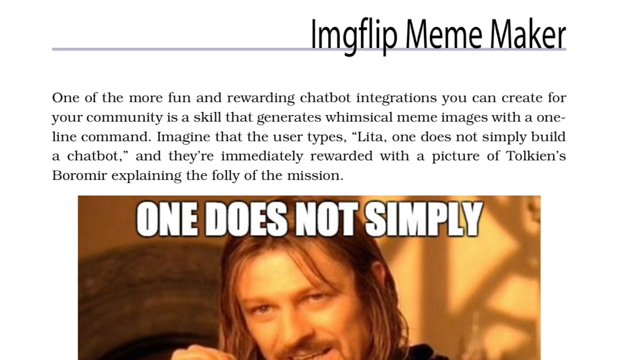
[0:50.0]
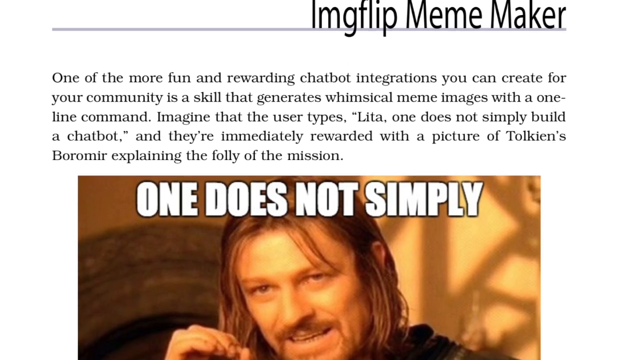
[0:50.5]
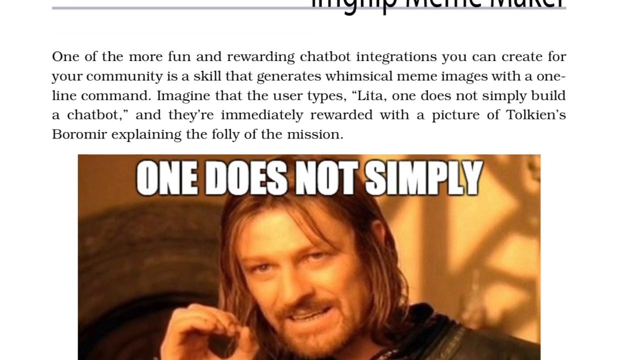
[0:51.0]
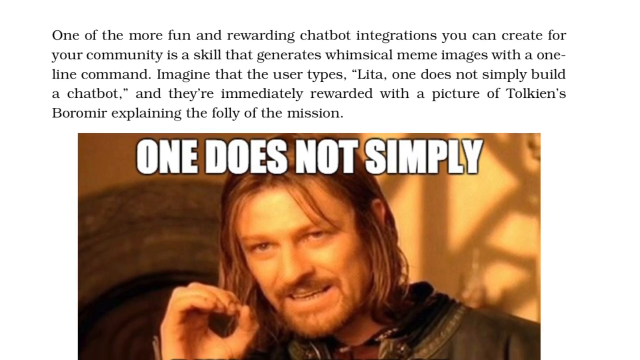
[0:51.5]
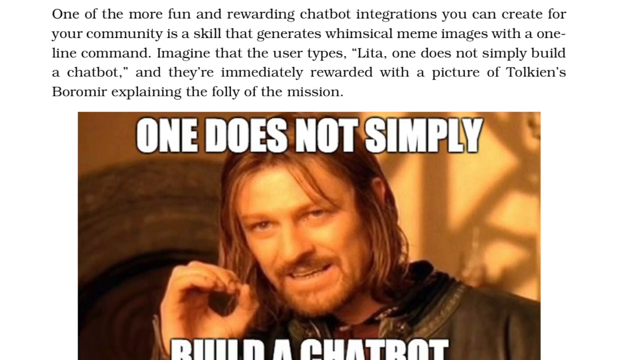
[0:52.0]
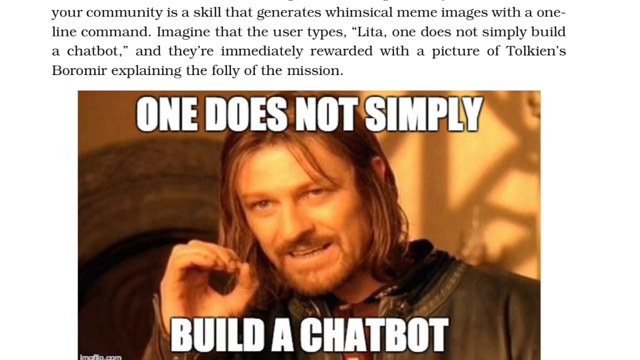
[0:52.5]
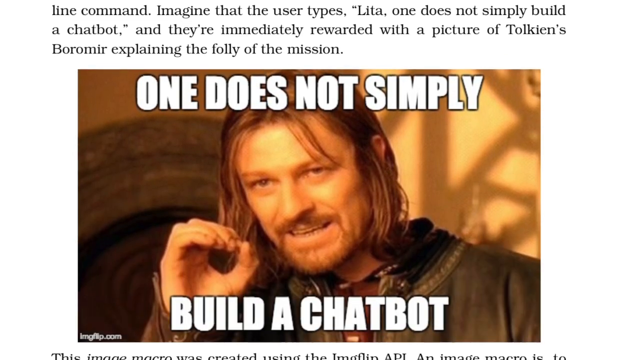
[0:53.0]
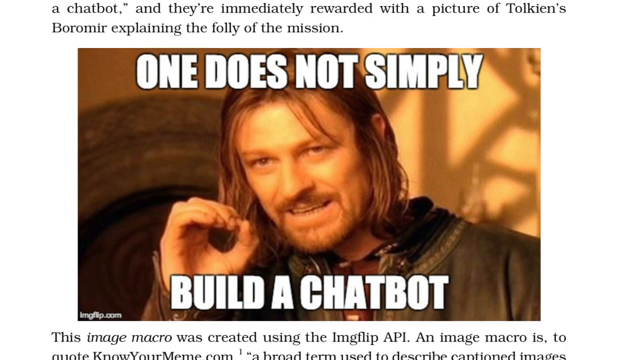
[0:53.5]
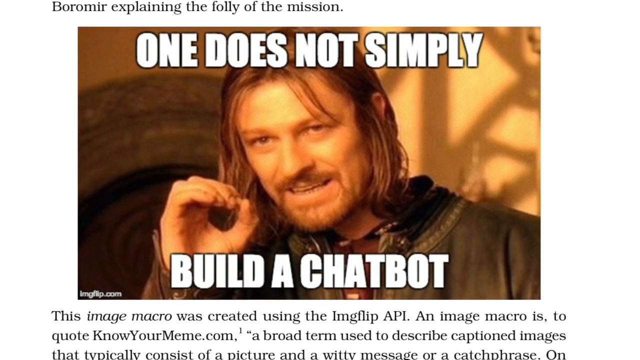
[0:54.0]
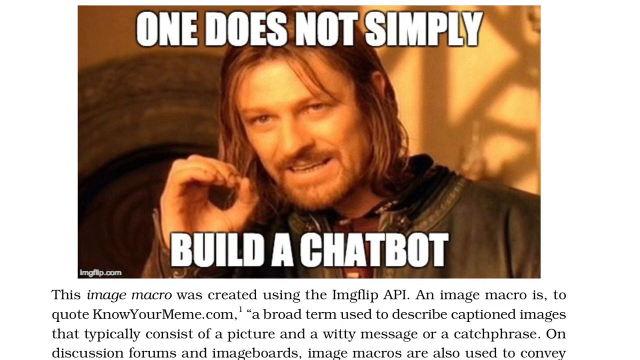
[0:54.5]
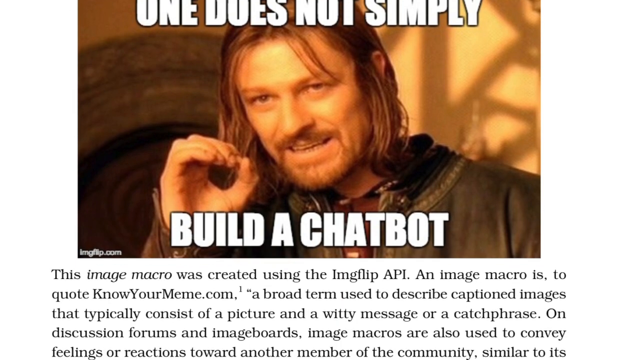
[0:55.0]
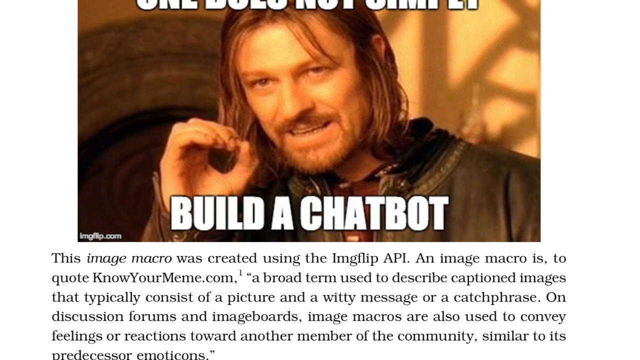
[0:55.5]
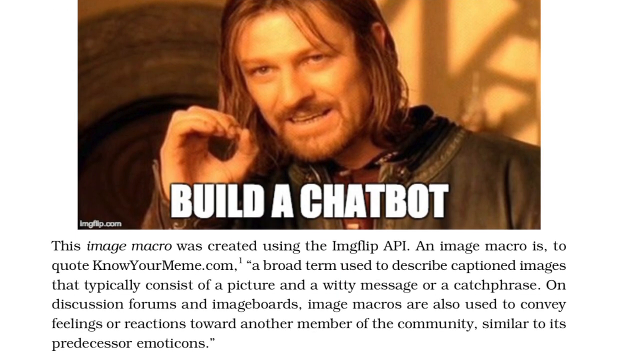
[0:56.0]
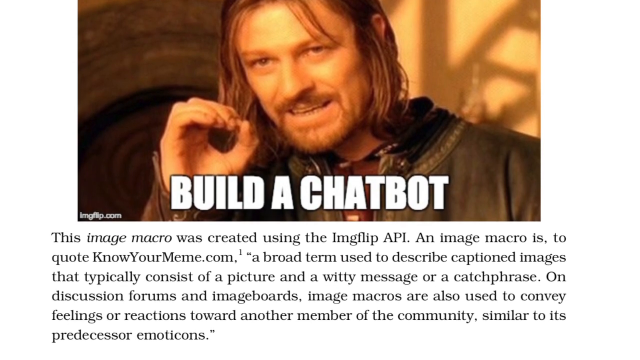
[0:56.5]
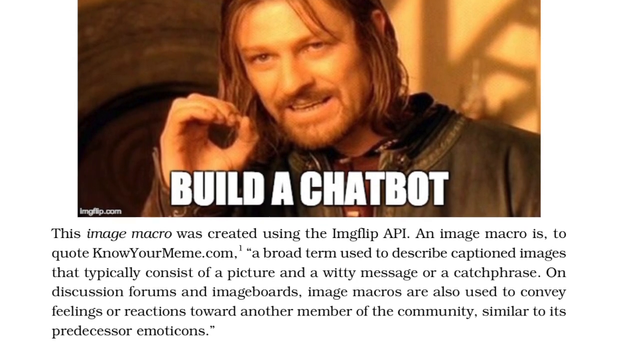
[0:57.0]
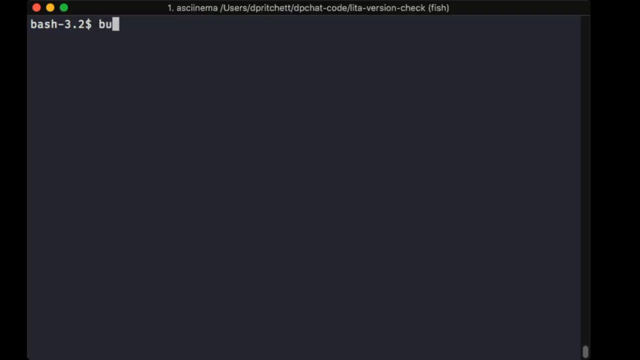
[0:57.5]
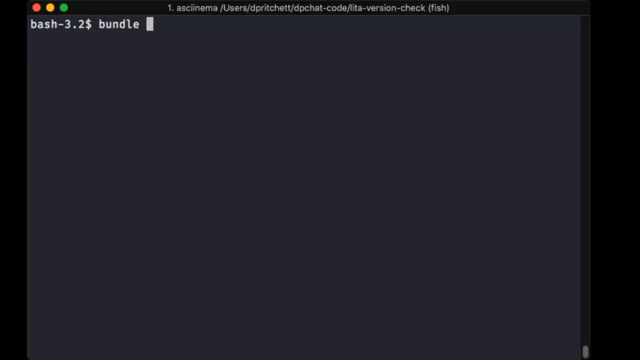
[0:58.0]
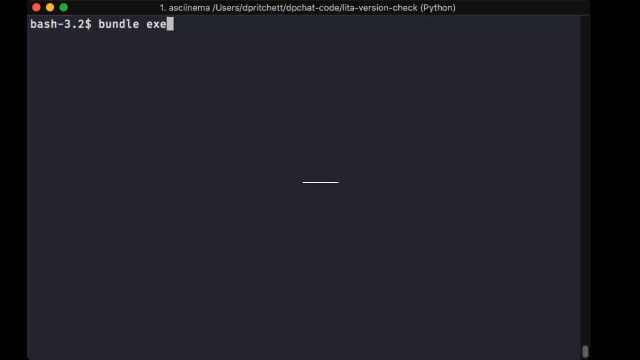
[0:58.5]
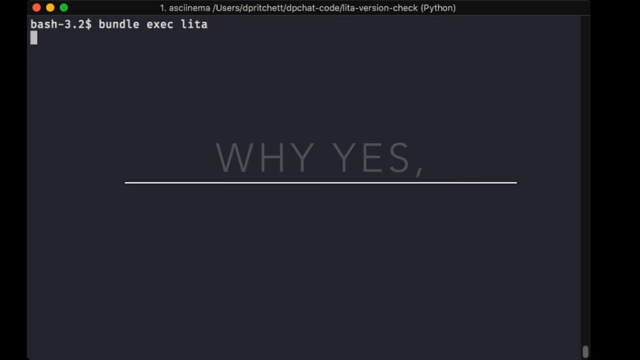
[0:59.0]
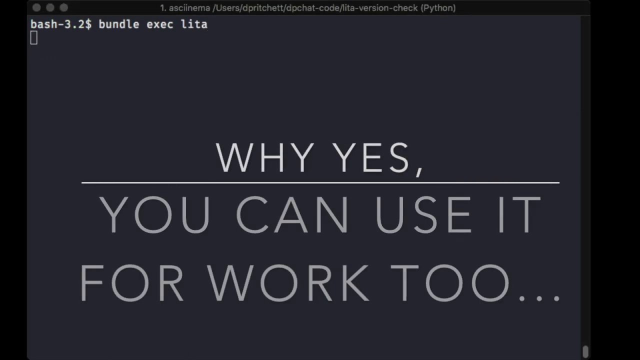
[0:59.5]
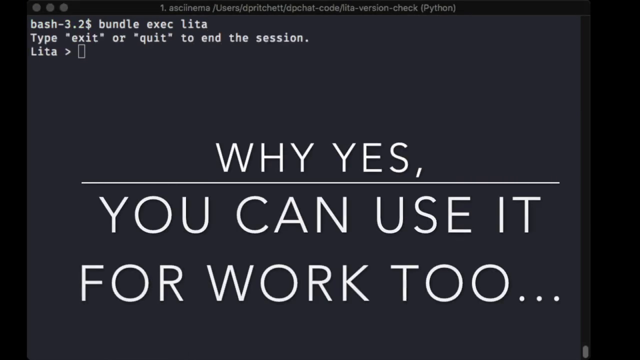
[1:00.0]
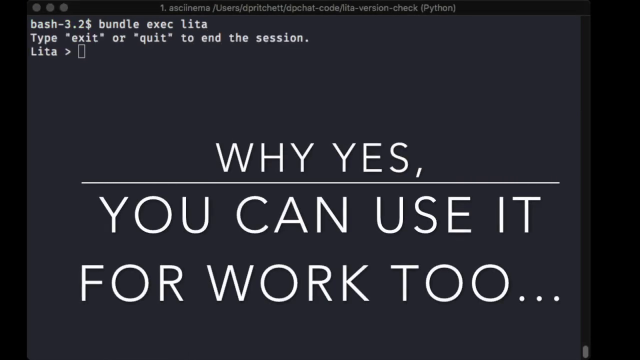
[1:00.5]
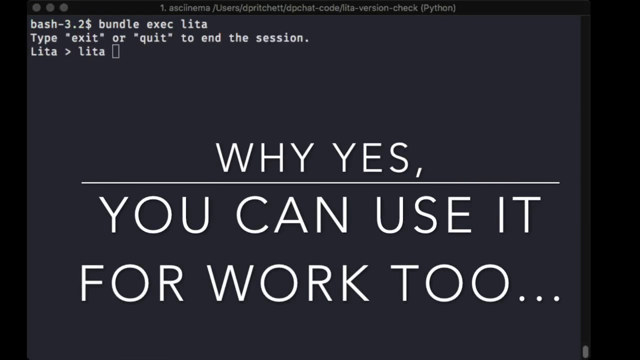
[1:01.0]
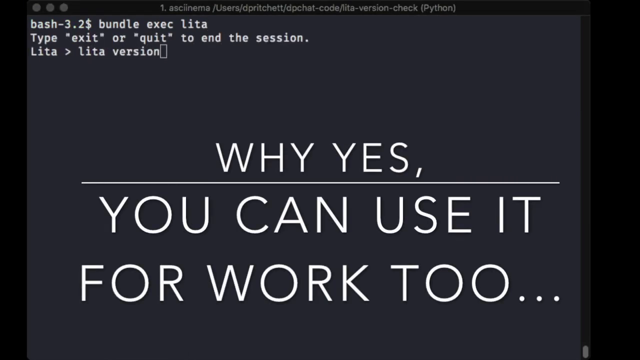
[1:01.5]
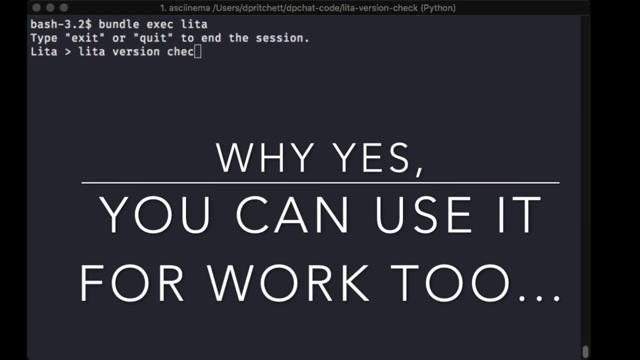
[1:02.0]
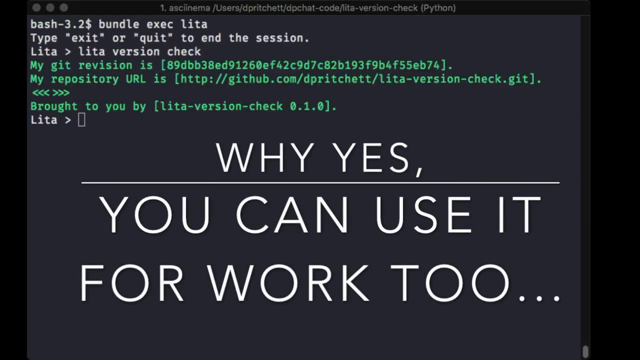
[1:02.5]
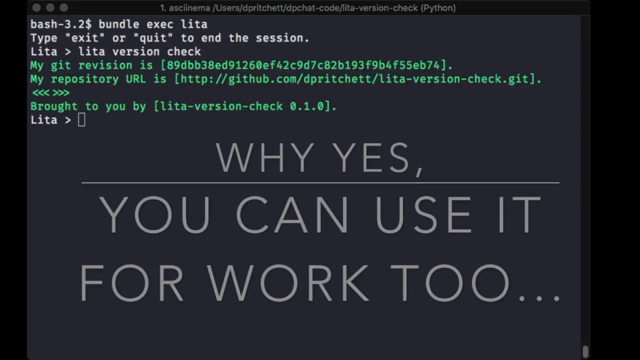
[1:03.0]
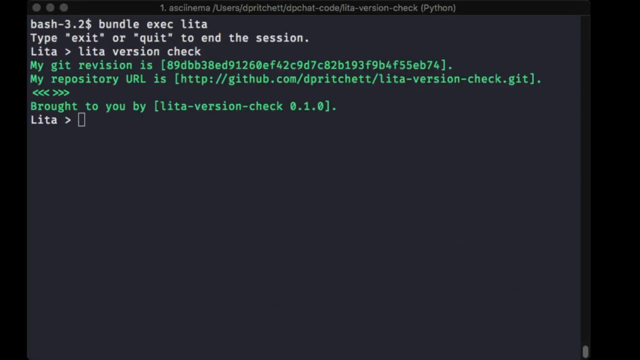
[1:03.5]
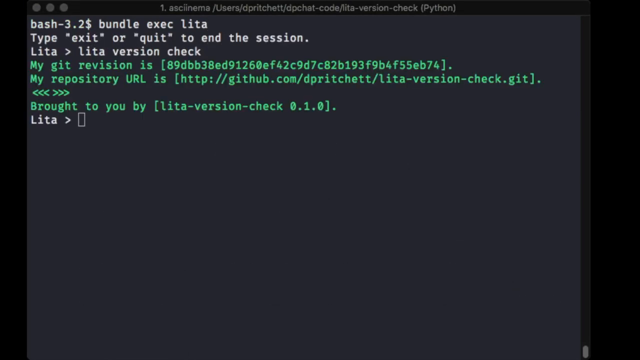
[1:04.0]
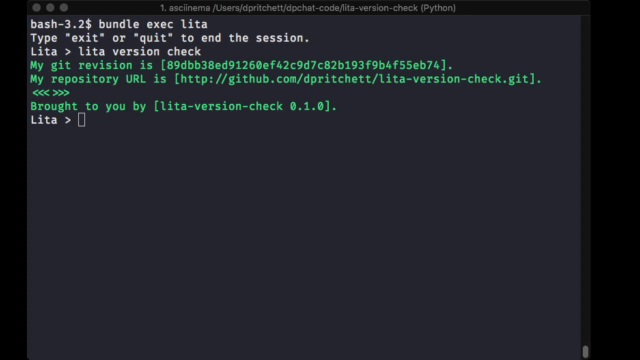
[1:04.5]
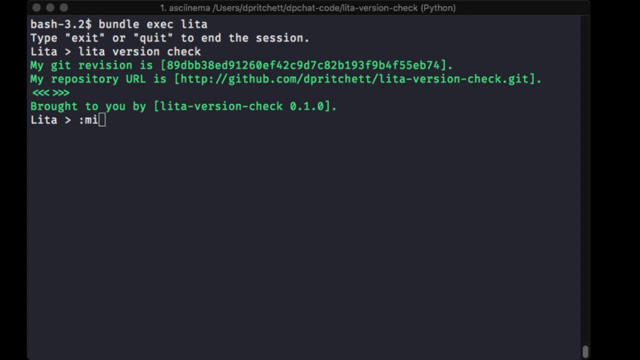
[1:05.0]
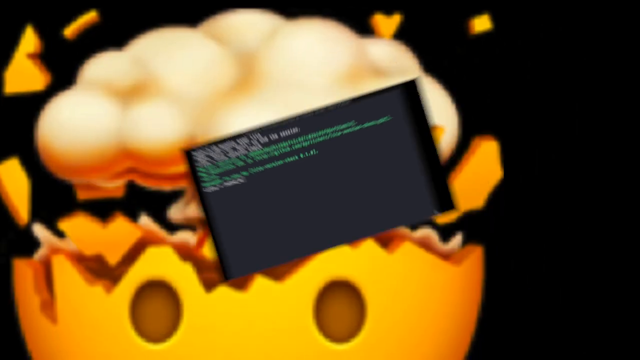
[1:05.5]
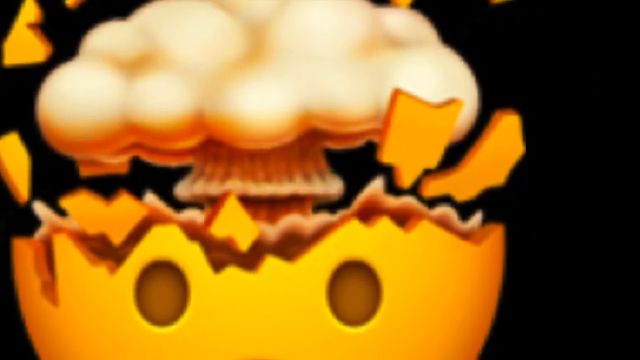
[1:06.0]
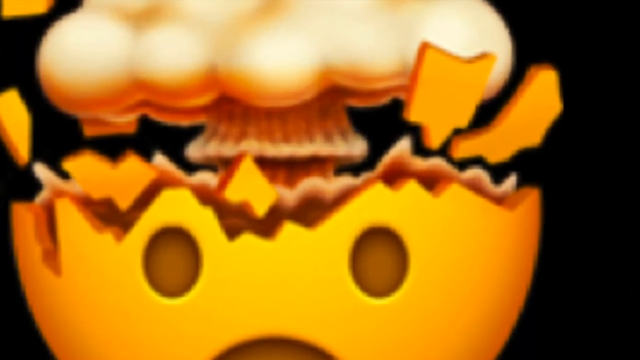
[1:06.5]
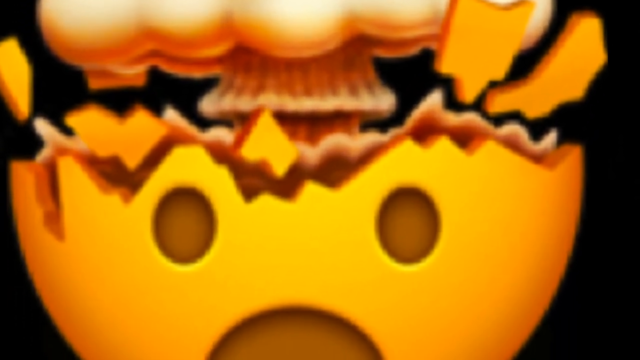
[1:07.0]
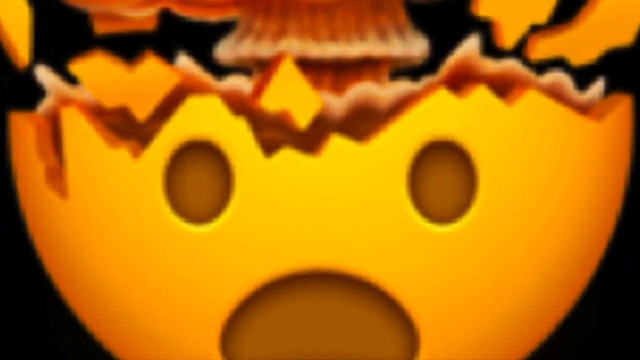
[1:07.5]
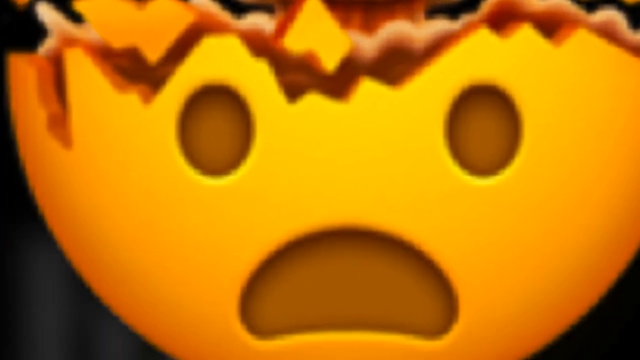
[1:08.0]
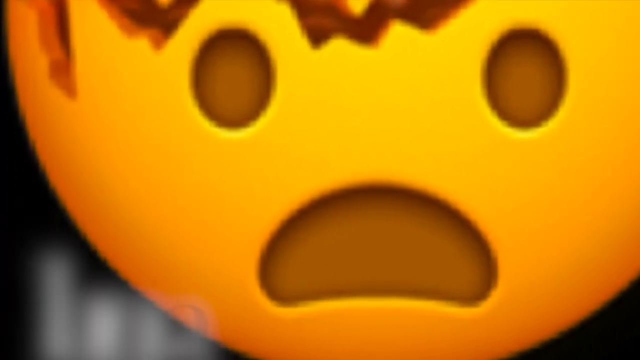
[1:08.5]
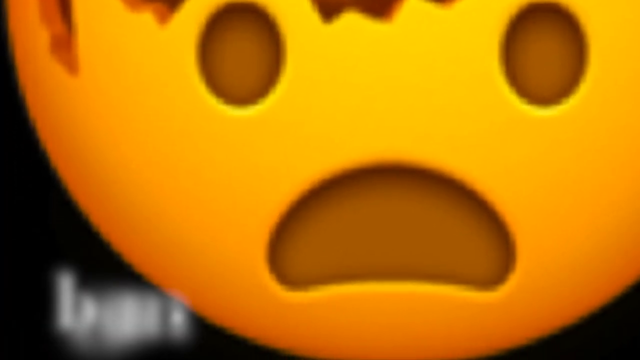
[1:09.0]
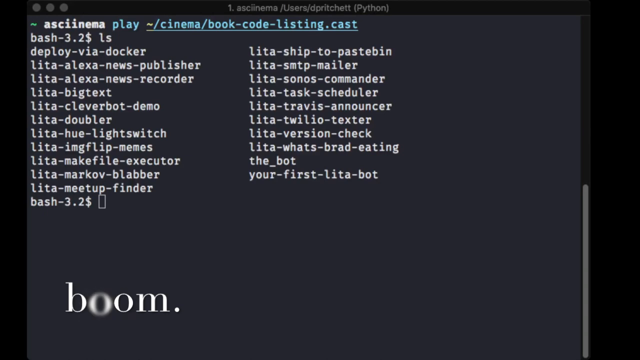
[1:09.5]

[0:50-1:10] A page with a meme on it appears. At the top of the page are words ending in "Meme Maker," followed by a paragraph of black text, and then a meme of a man with his hand in a gesture as if making a point. The text on it reads "one does not simply build a chatbot." He is dressed in old-world clothing and has long, sort of stringy hair and a full scruffy beard. The video scrolls up to show another paragraph of text. It then transitions to a black screen on a computer monitor with the words "why yes" in the middle, while the cursor appears to be writing code. It continues with "you can use it for work too" as code is written at the top of the page. The video then transitions to an exploding-head emoji.